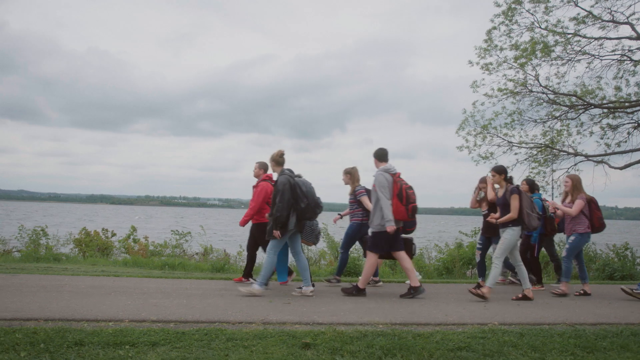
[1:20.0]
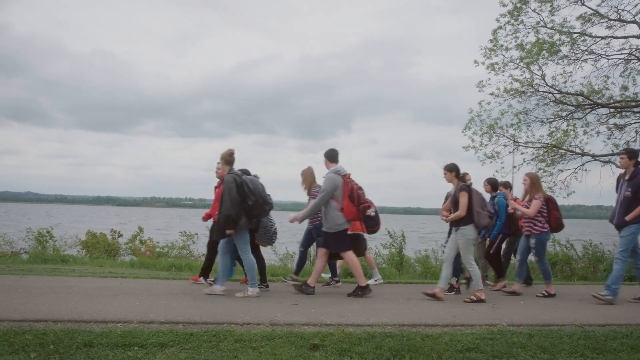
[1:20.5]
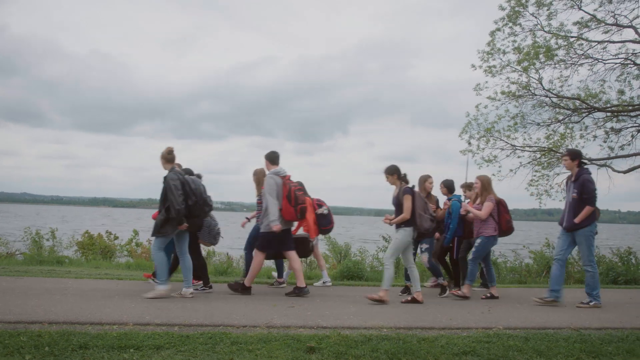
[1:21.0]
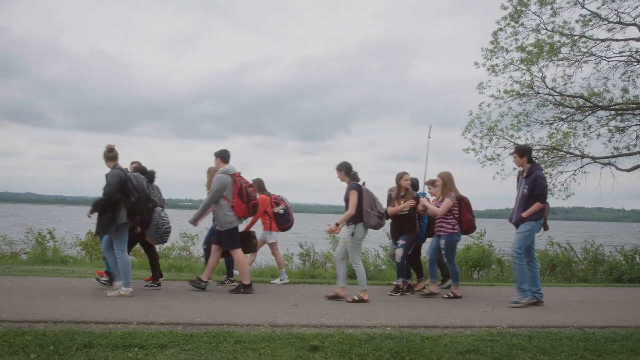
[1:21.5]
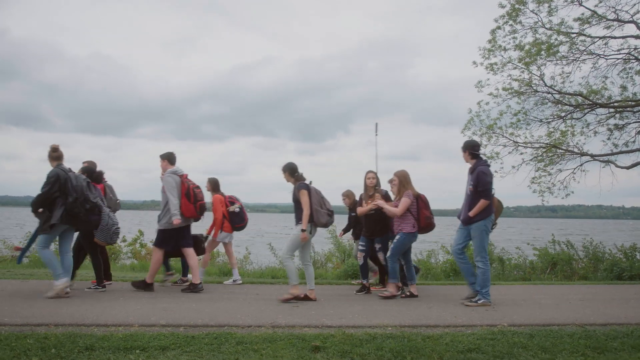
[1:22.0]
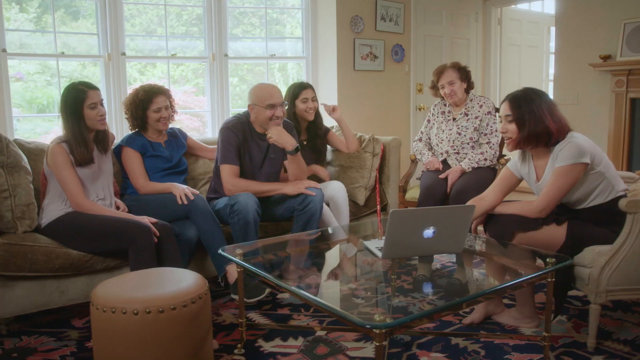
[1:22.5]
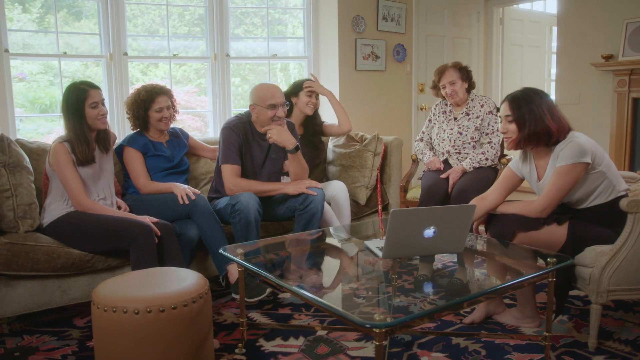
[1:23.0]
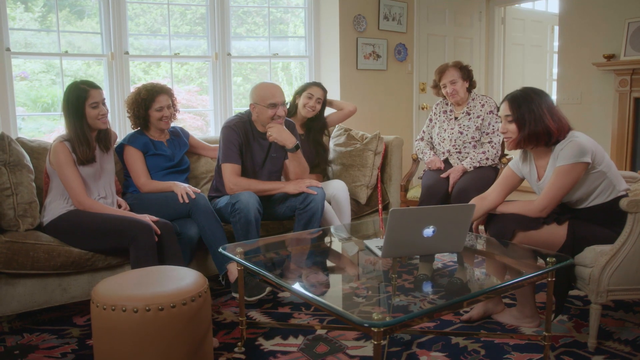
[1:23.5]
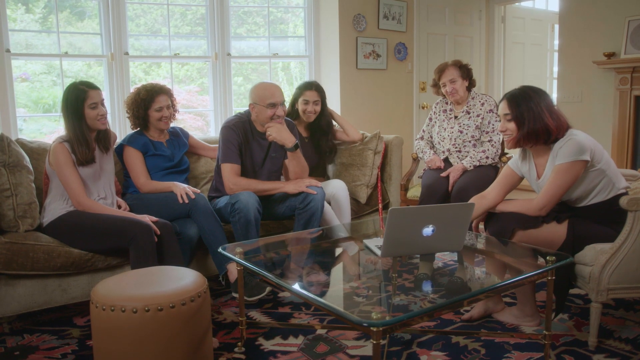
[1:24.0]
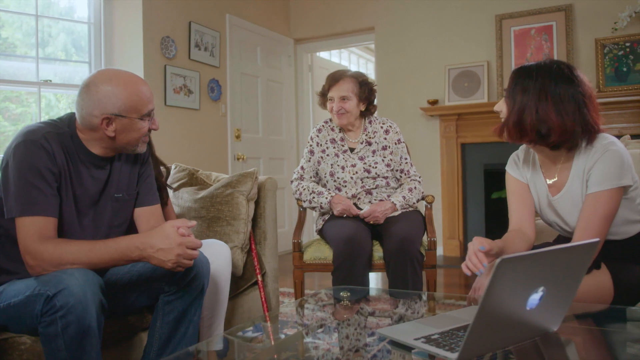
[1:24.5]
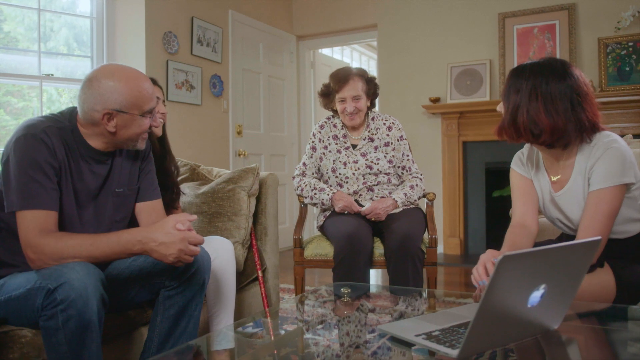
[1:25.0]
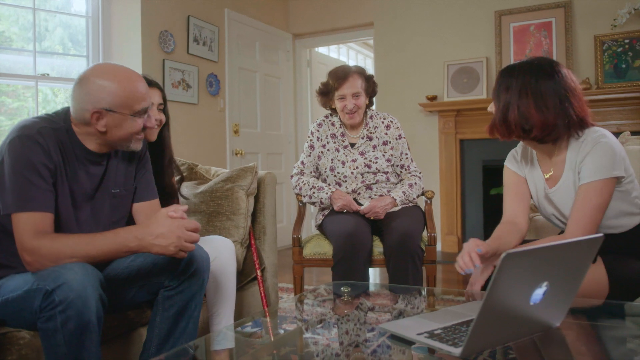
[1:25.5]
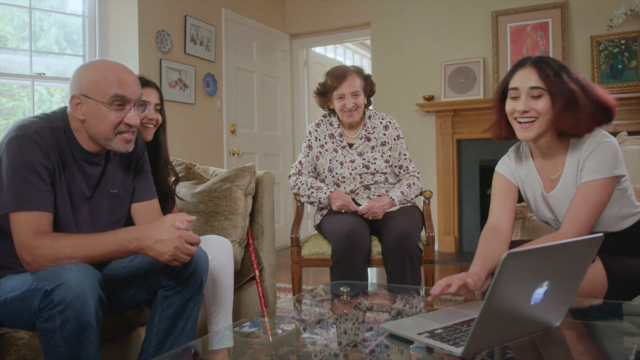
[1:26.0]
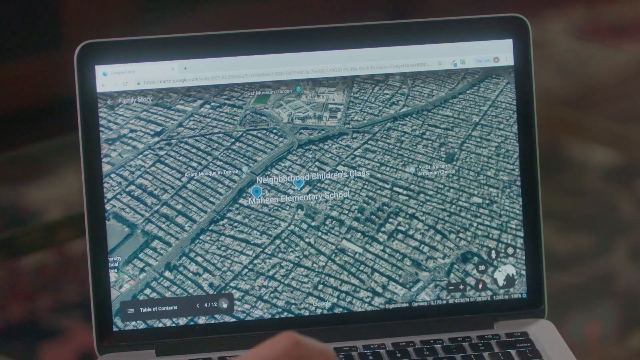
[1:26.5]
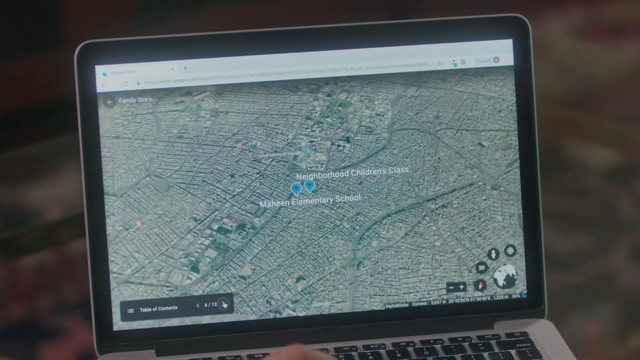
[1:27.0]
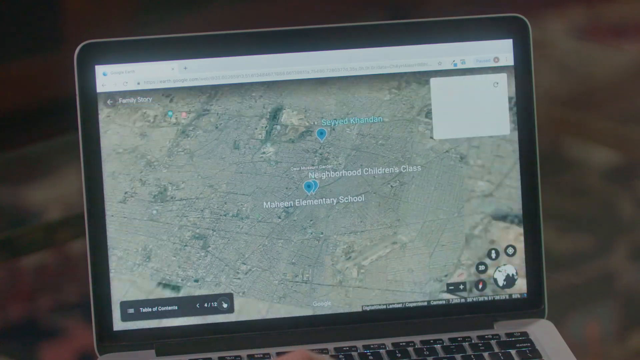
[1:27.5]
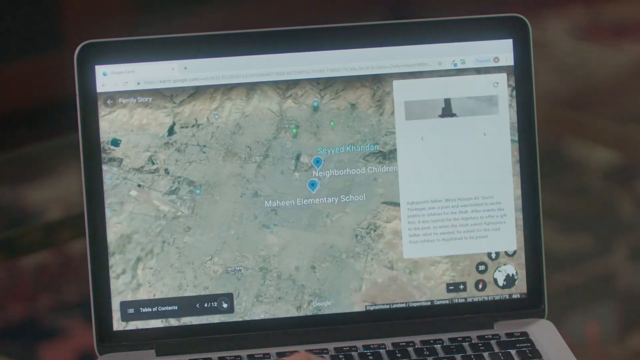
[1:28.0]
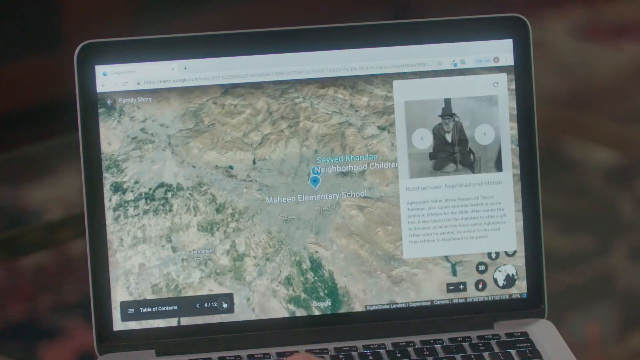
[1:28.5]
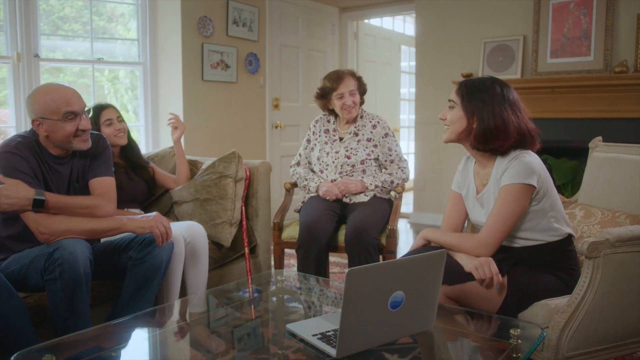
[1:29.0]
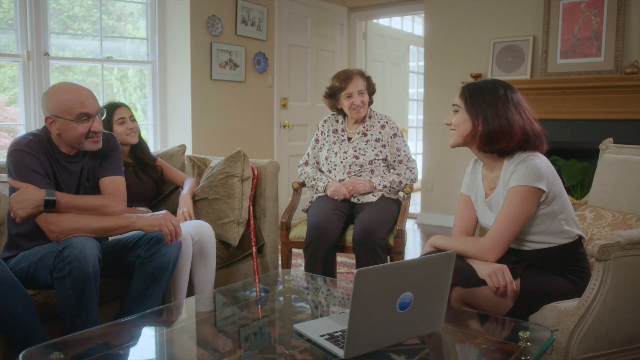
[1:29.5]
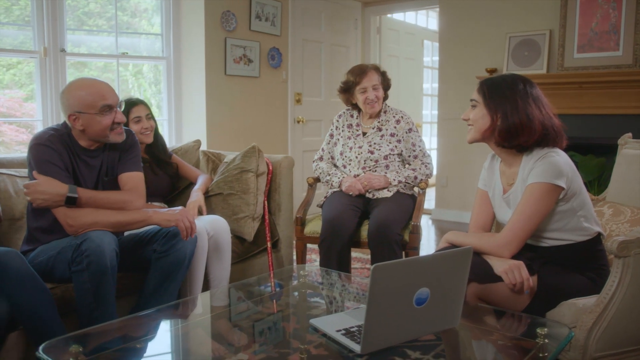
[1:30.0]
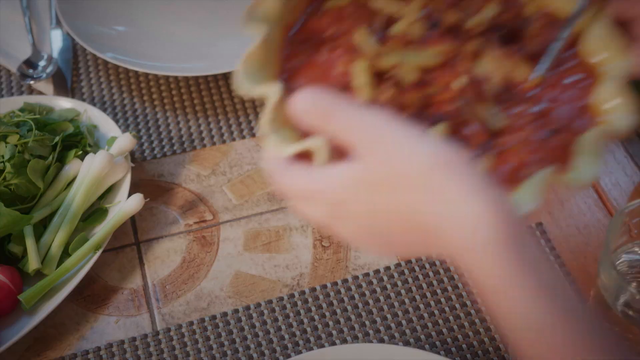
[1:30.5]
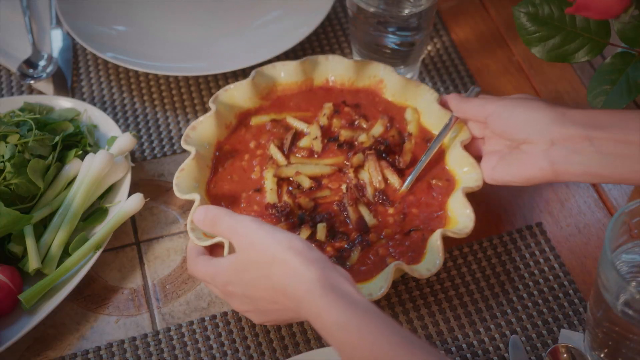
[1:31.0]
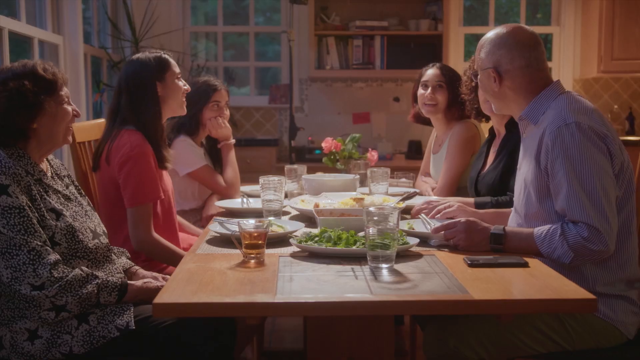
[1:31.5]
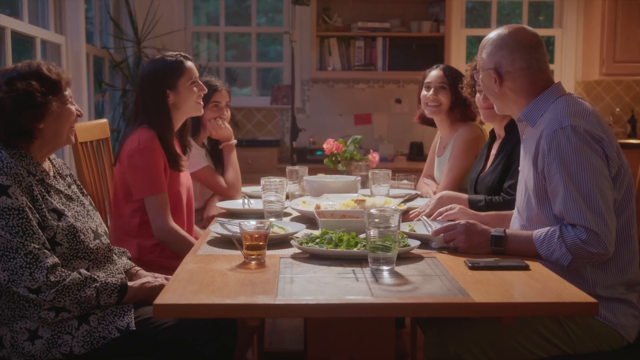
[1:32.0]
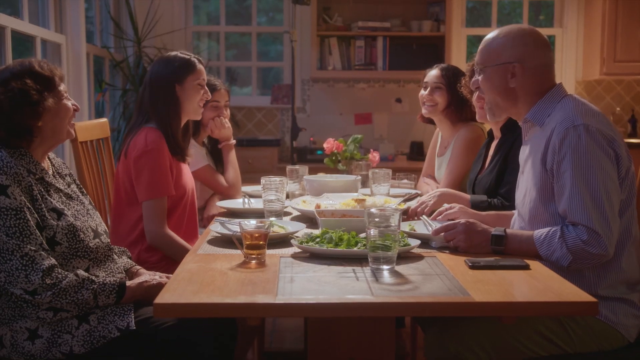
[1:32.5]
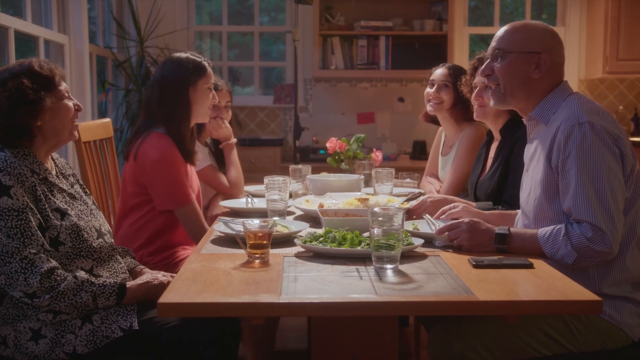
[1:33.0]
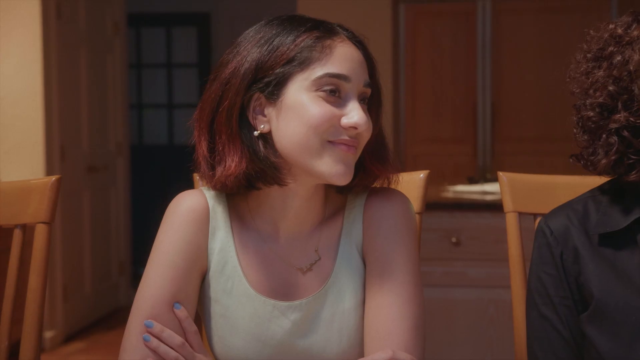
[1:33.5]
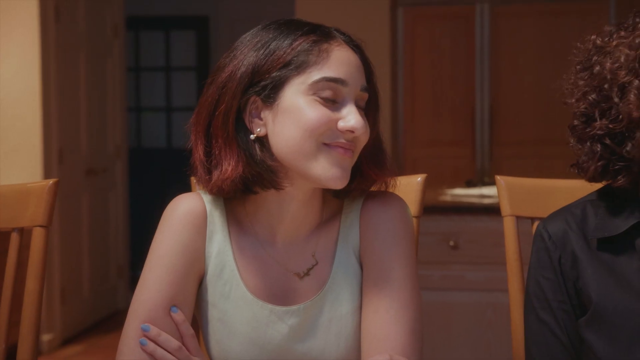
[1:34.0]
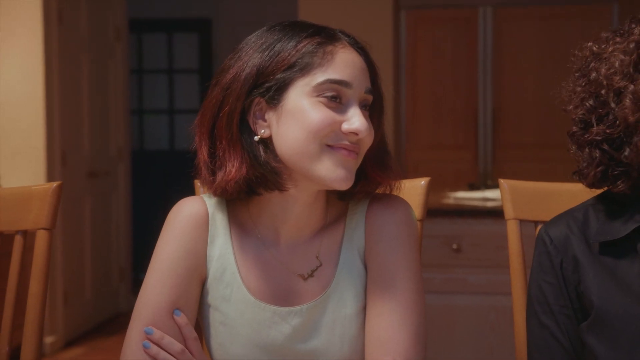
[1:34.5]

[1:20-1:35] Many people walk along a riverside; some have backpacks on and some have fishing poles, and they are all talking and laughing. They all appear to be young, probably teenagers to early 20s. The scene then shows a young woman in her early 20s sitting with a family in a living room; there are about seven people in the room, and she points at the laptop while everyone laughs and converses. In the kitchen, a bowl of possibly rigatoni is on a table among other food, next to greenery, and everyone sits around a large kitchen table talking and laughing. A glimpse of the laptop screen shows a map with geotags, one showing "Maheen Elementary School" and another showing "Neighborhood Children's", with different information as it zooms out. The dinner scene shows everyone talking and laughing.